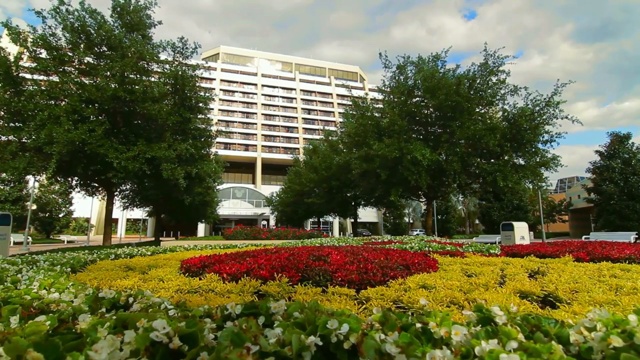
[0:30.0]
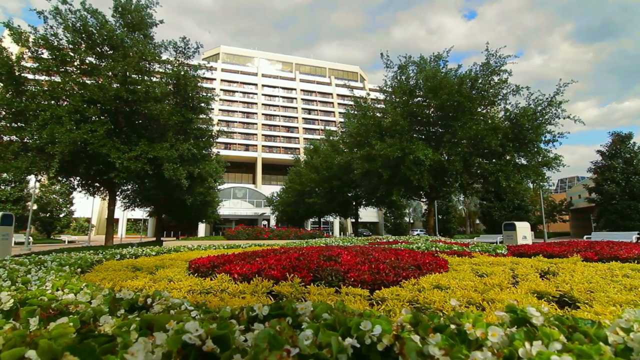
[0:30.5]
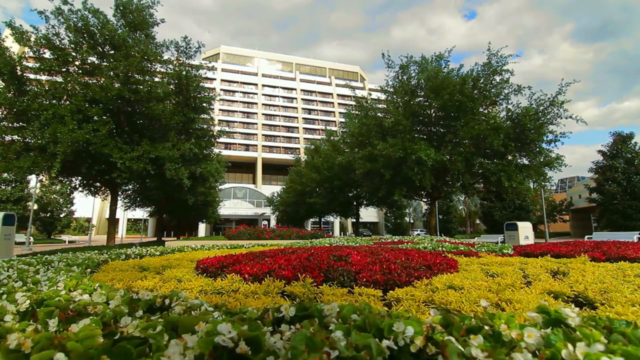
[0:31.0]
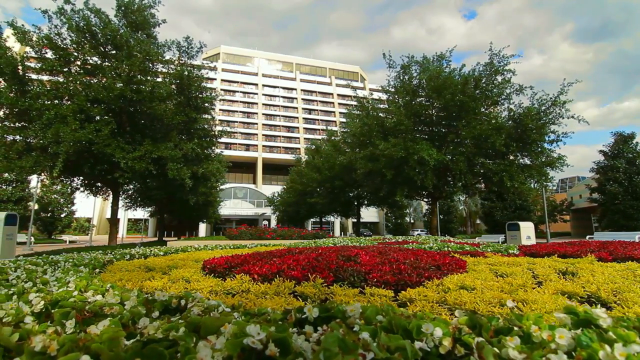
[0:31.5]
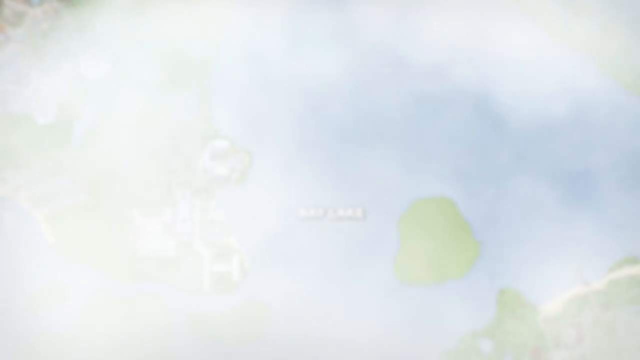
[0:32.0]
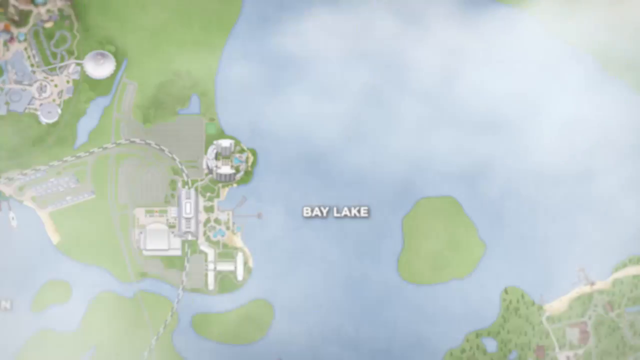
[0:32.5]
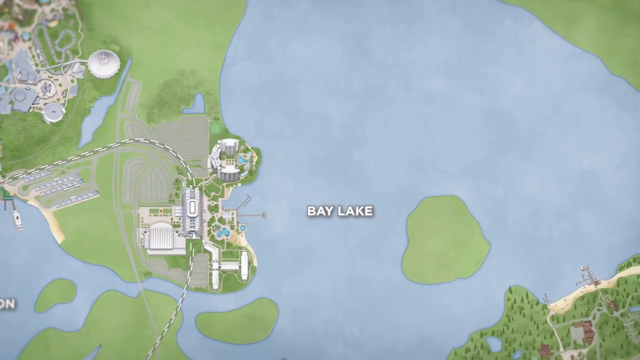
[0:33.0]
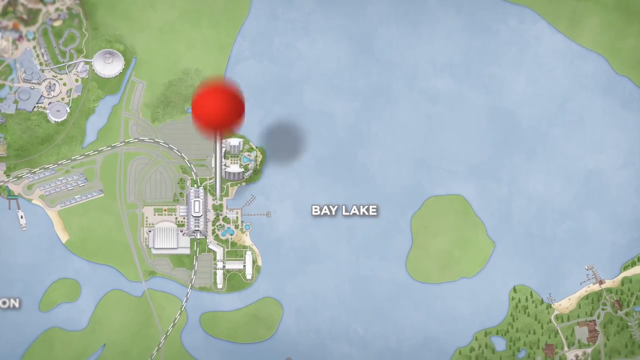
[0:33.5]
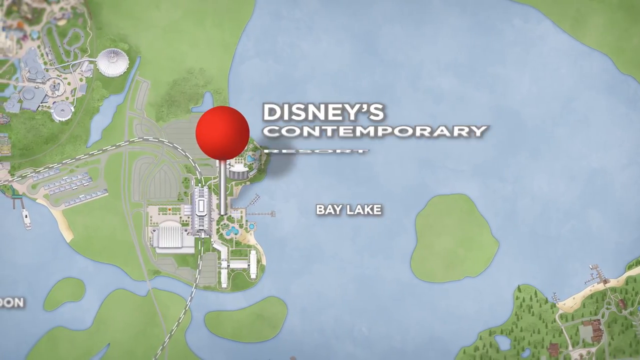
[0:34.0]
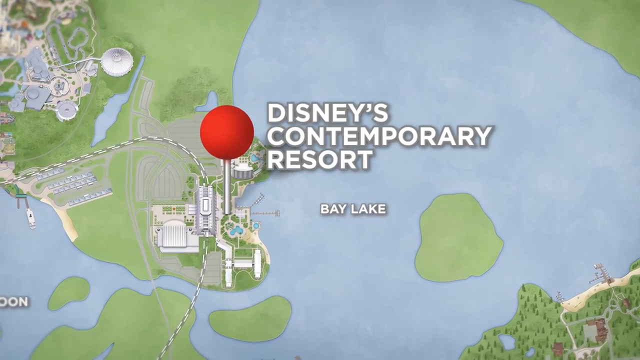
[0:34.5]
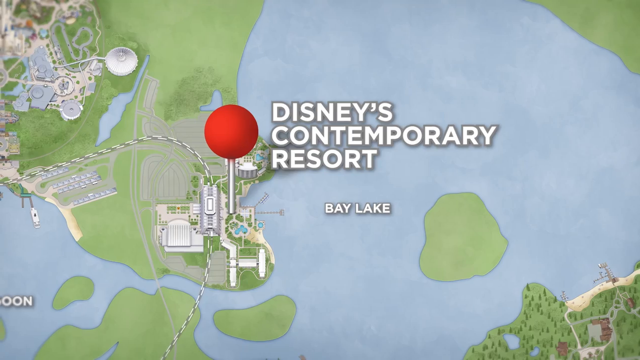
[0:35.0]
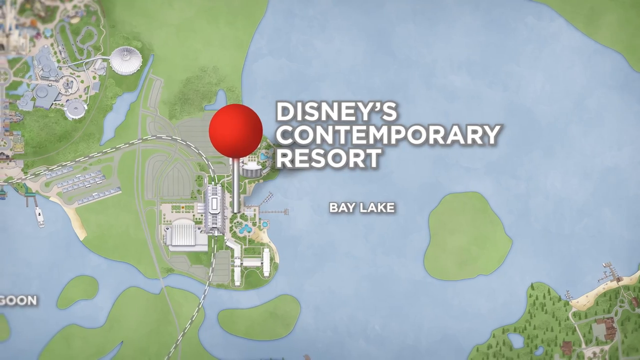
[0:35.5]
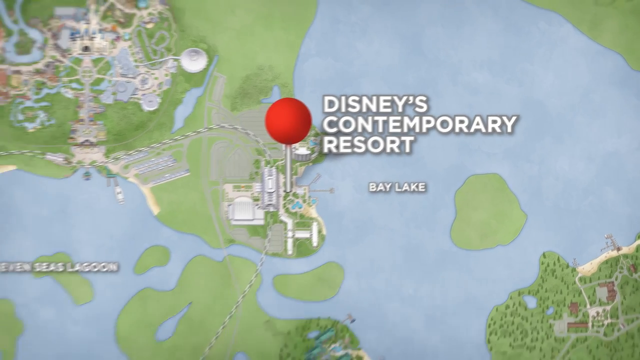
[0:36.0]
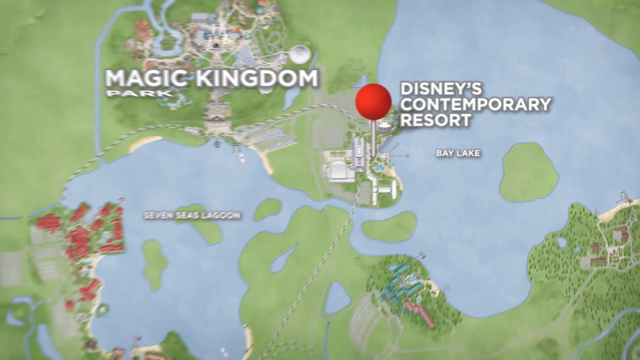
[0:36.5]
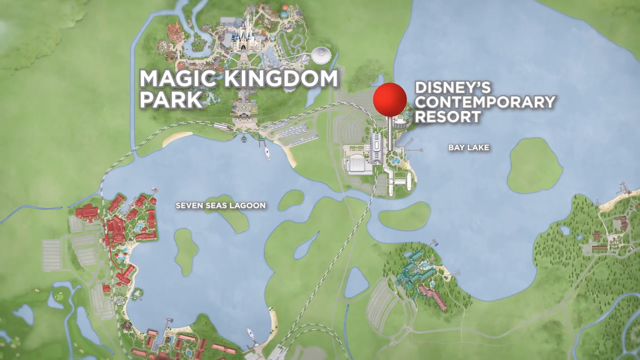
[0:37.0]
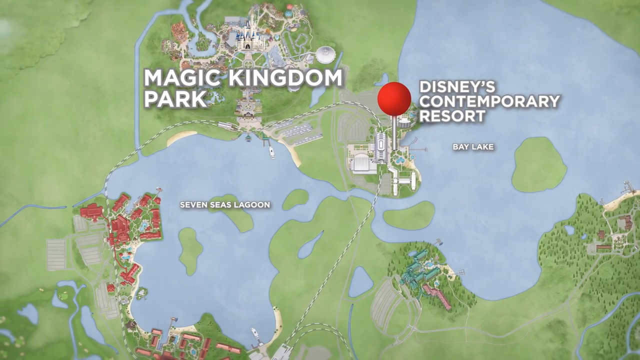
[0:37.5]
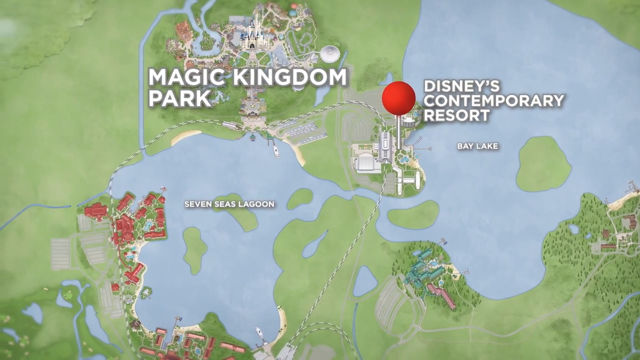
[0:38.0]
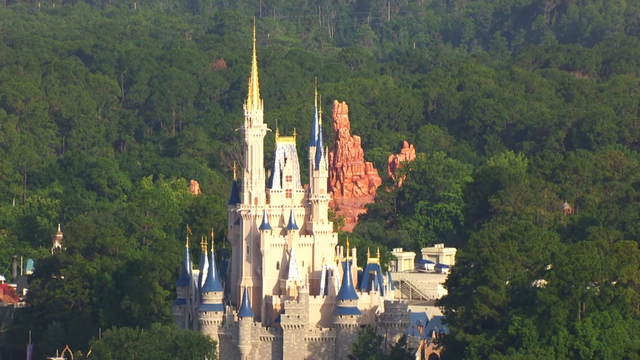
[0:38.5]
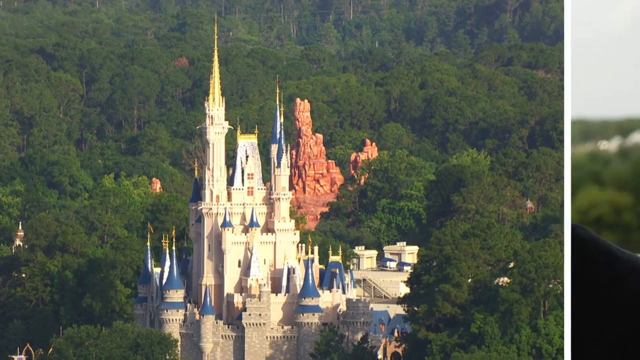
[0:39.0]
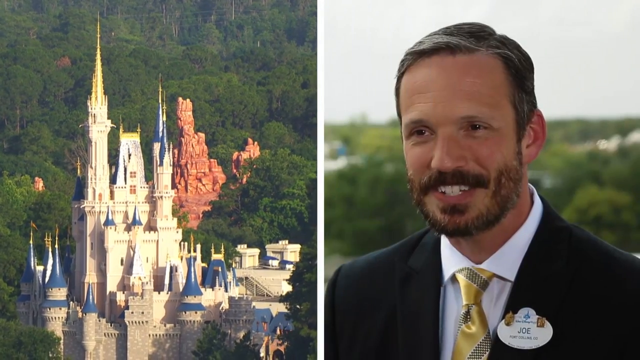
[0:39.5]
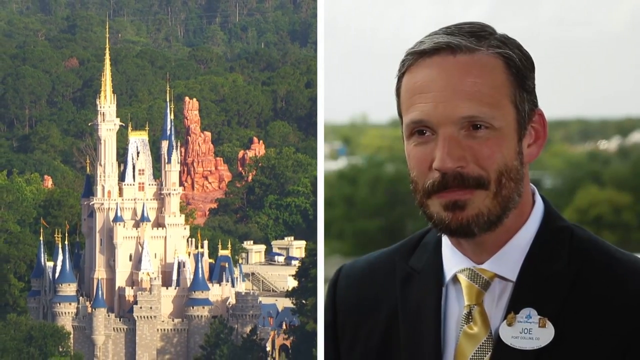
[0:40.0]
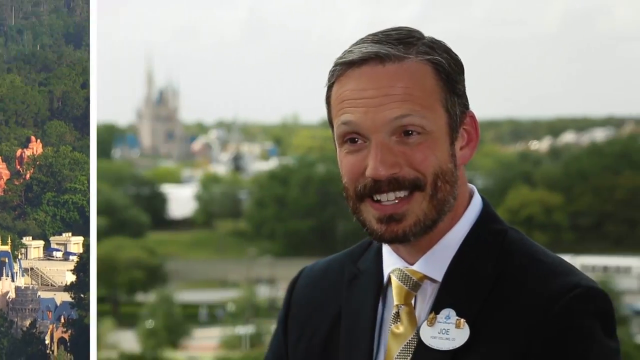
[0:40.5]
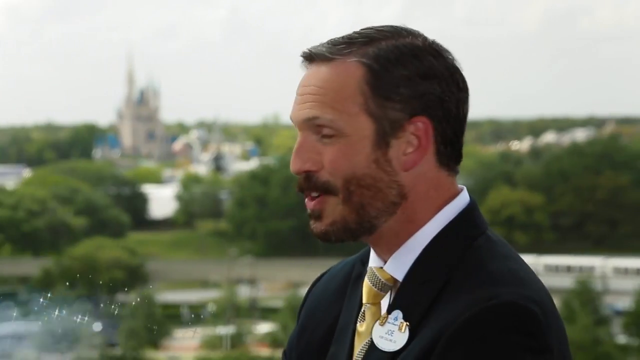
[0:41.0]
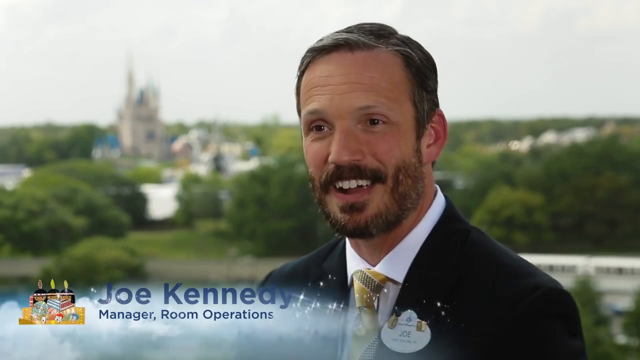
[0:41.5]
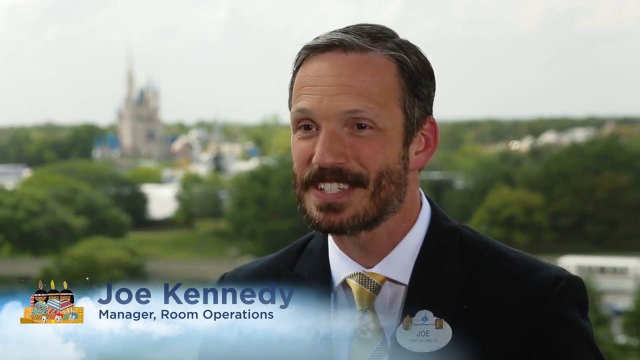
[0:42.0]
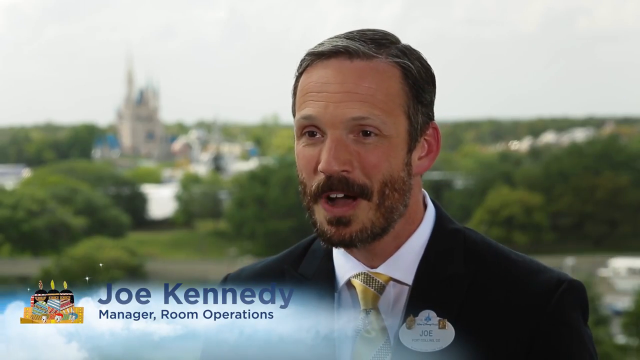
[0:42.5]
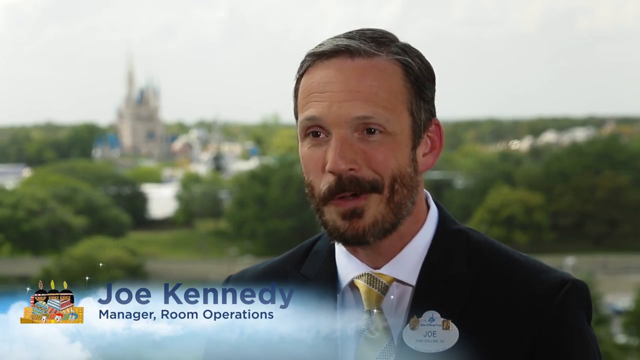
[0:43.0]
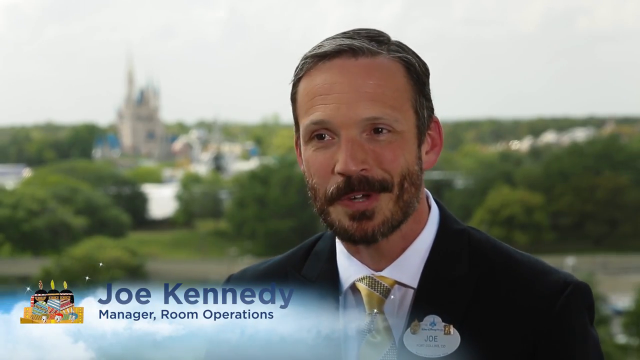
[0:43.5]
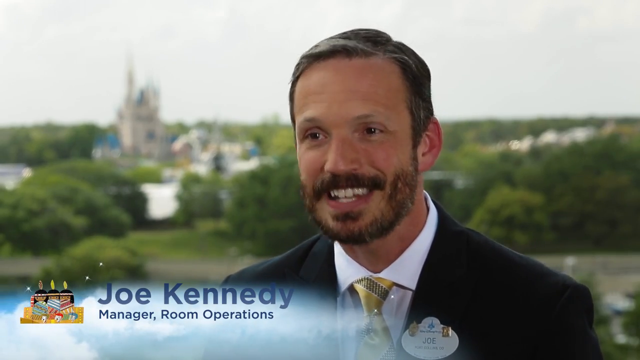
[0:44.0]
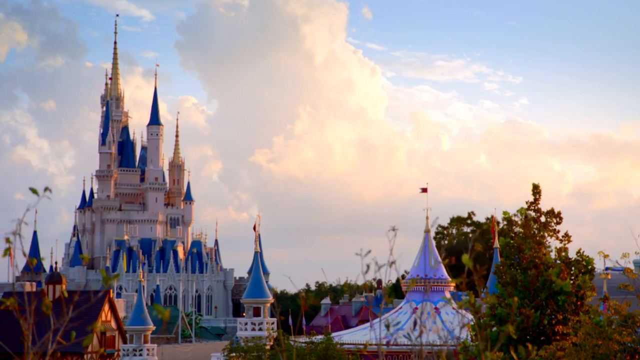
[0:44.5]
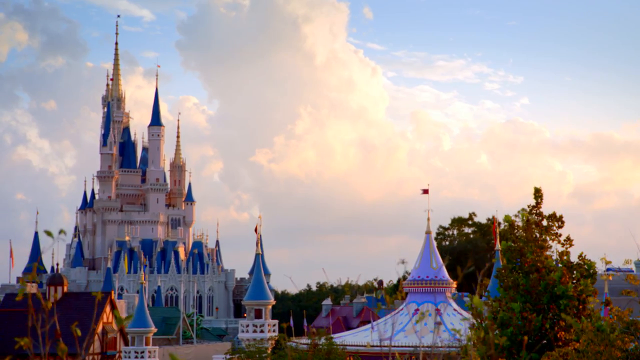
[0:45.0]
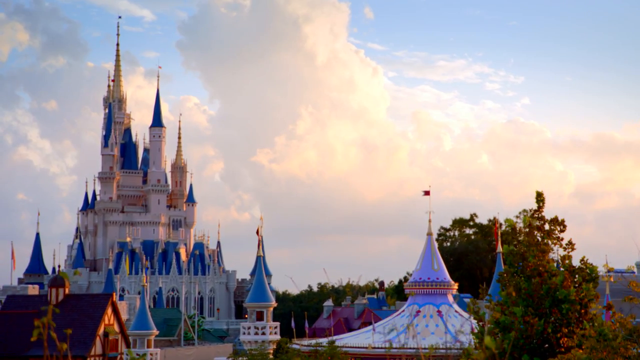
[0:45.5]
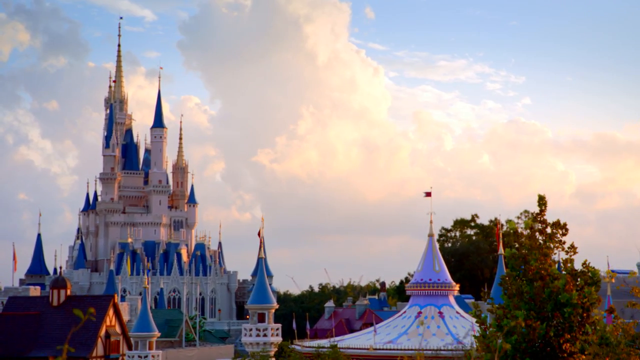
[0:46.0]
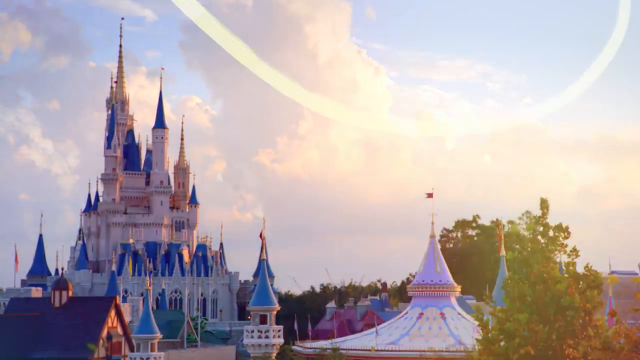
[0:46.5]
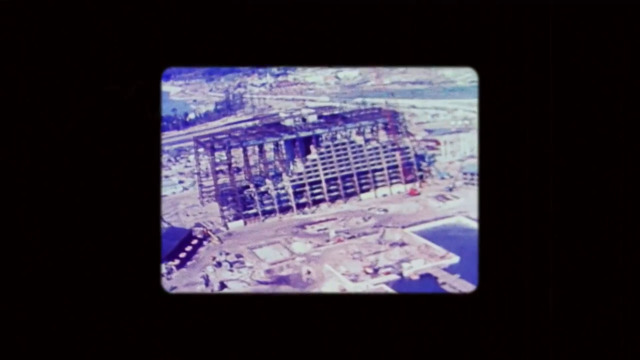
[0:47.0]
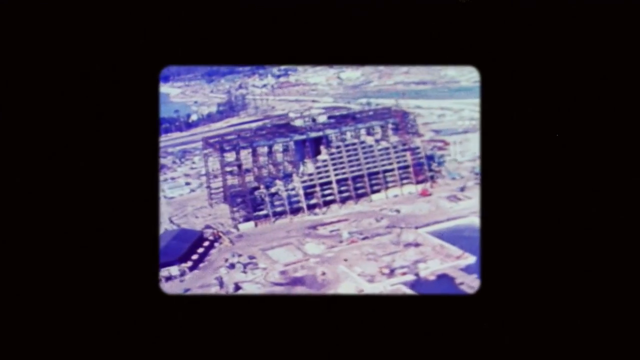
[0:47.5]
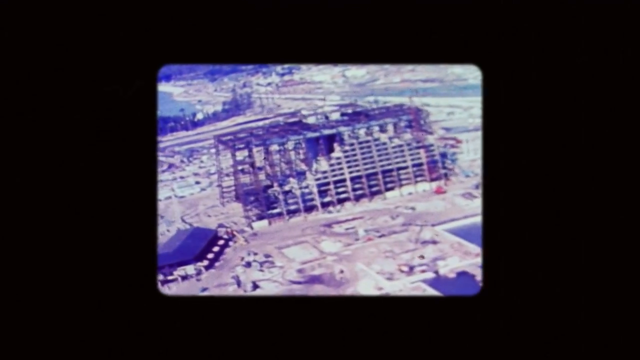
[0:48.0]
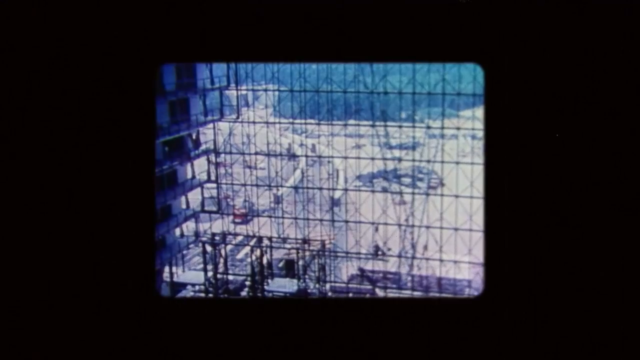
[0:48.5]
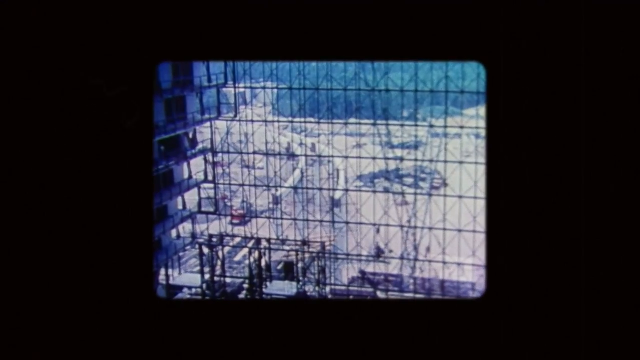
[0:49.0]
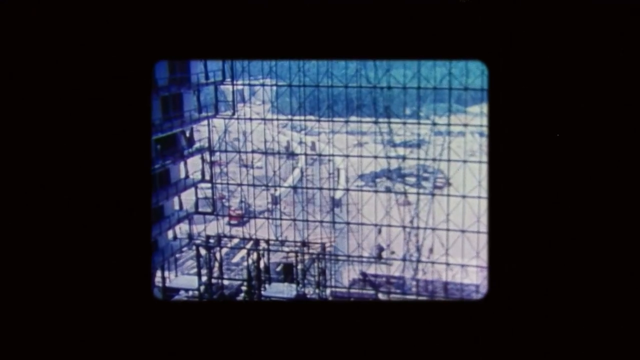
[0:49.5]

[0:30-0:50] Under the title "Disney's Contemporary Resort, Walt Disney World," an exterior shot of the resort is followed by a computer graphic giving an overview of Bay Lake. A red pushpin comes down into the graphic, marking the location of Disney's Contemporary Resort, and the video zooms in on the graphic to show the location of the Magic Kingdom Park. An exterior shot of the castle follows, then a split screen in which a gentleman, Joe Kennedy, the manager of room operations, speaks. He continues speaking with the castle in the background, and the video then spans to old photos from when the resort was first being built.